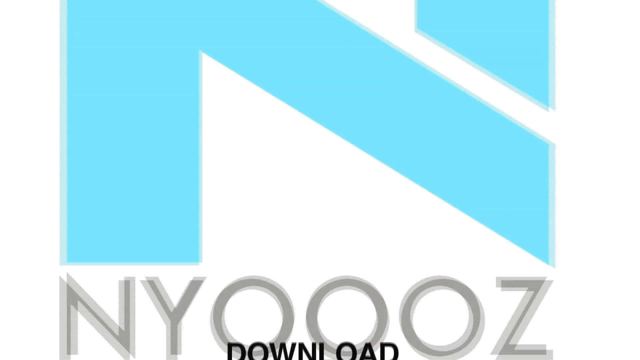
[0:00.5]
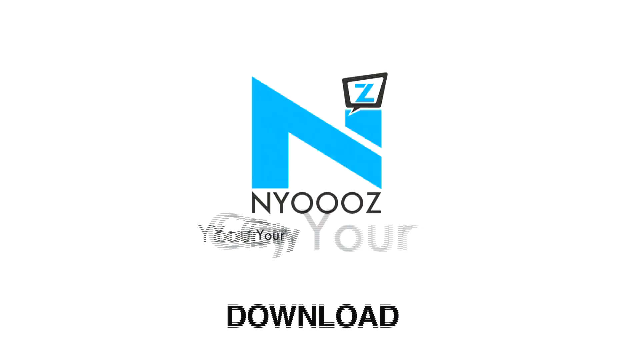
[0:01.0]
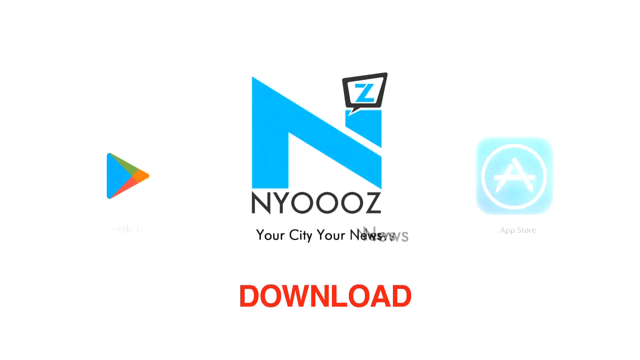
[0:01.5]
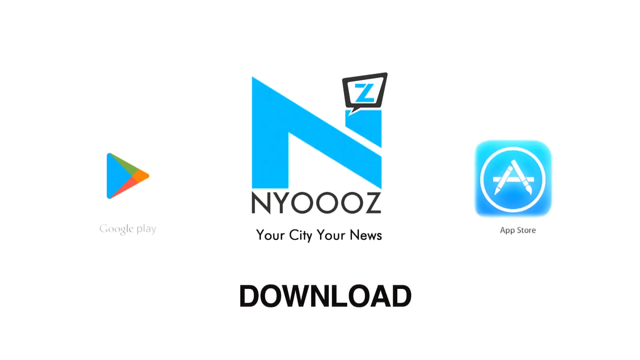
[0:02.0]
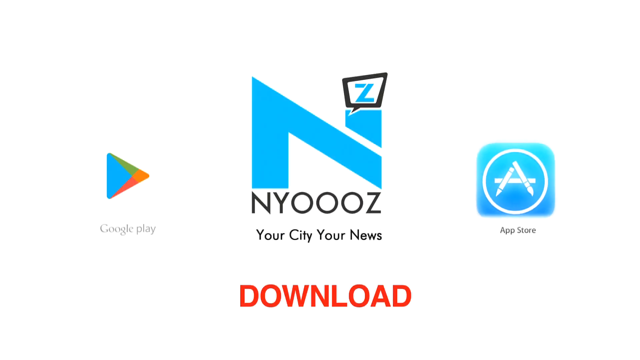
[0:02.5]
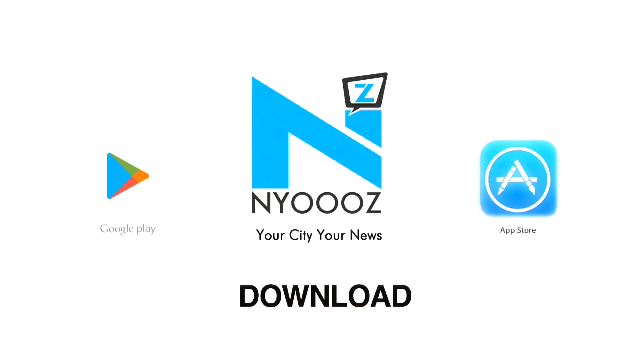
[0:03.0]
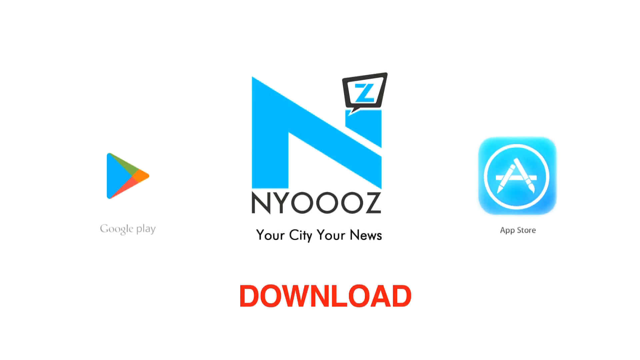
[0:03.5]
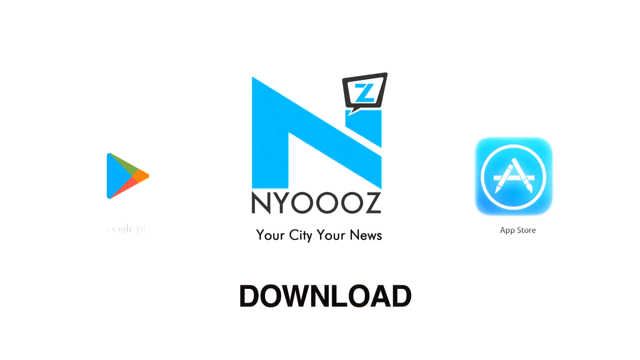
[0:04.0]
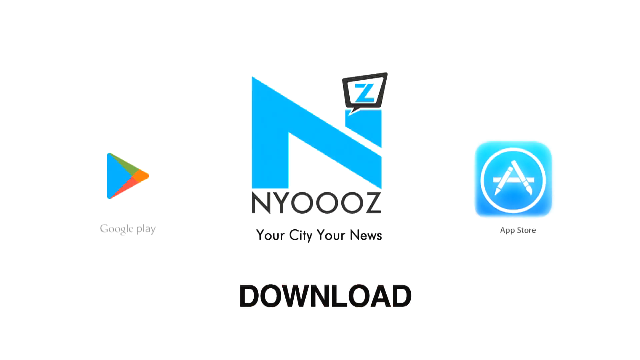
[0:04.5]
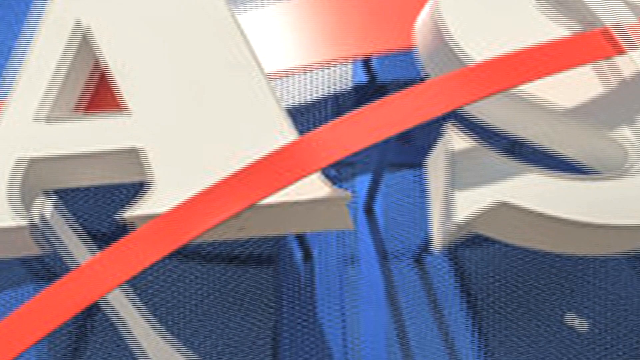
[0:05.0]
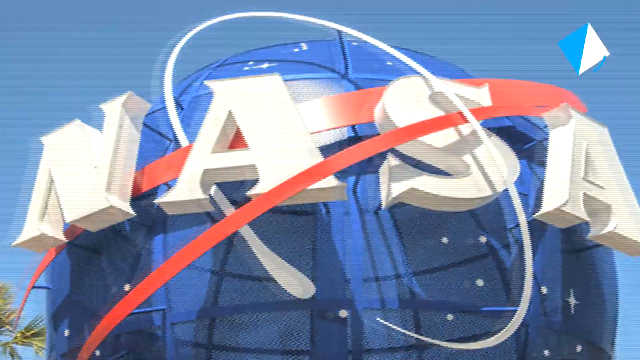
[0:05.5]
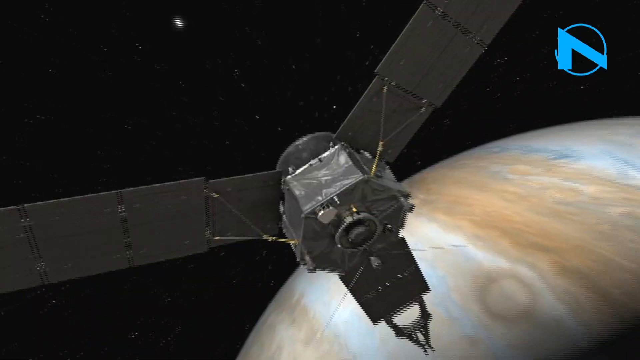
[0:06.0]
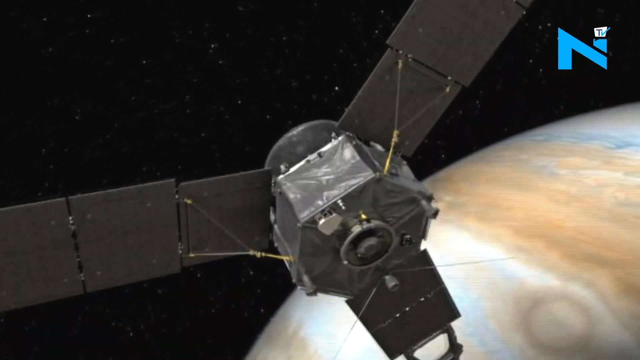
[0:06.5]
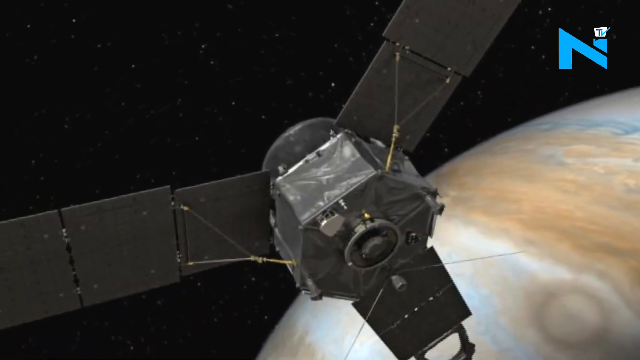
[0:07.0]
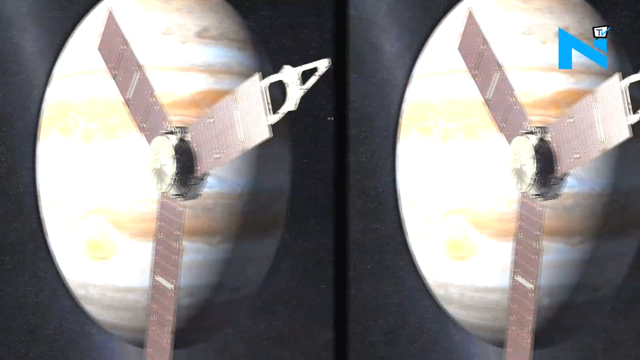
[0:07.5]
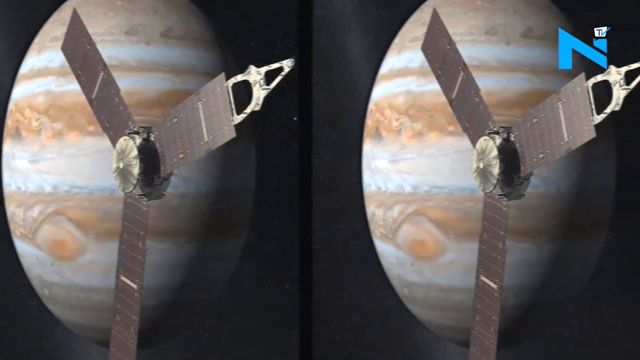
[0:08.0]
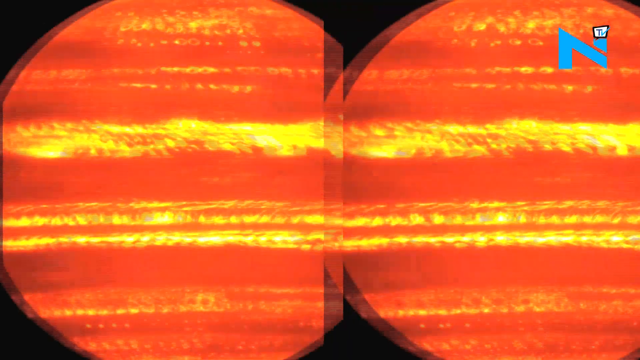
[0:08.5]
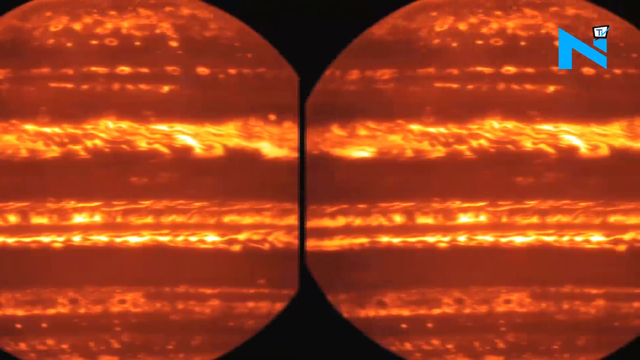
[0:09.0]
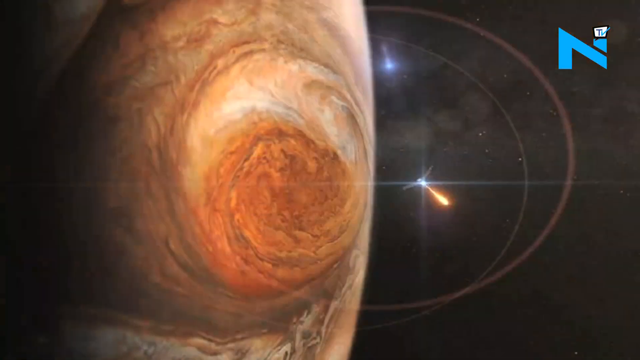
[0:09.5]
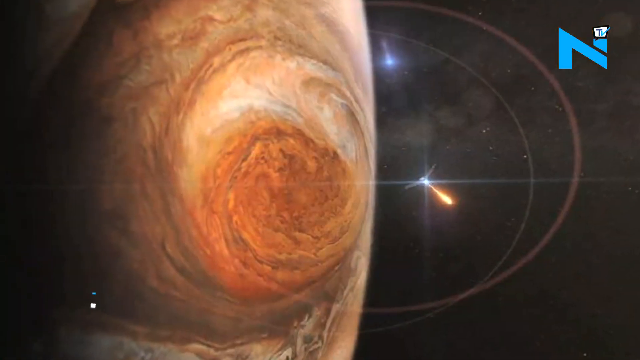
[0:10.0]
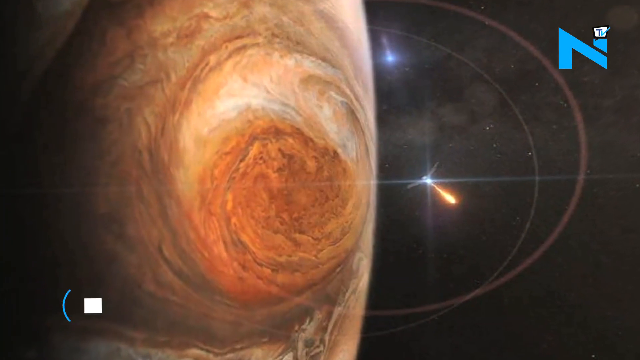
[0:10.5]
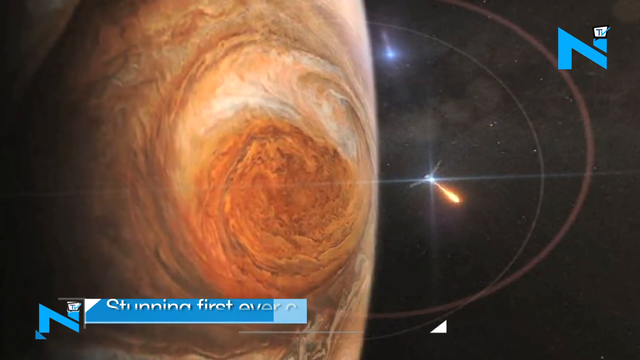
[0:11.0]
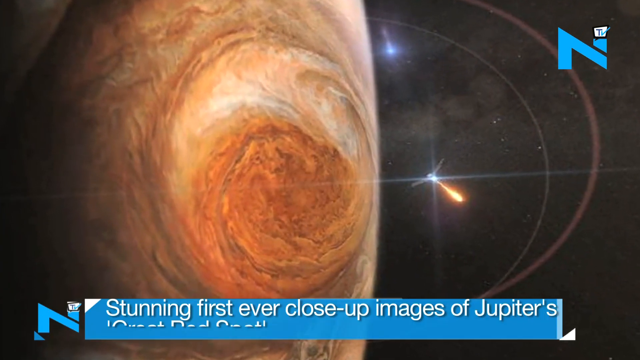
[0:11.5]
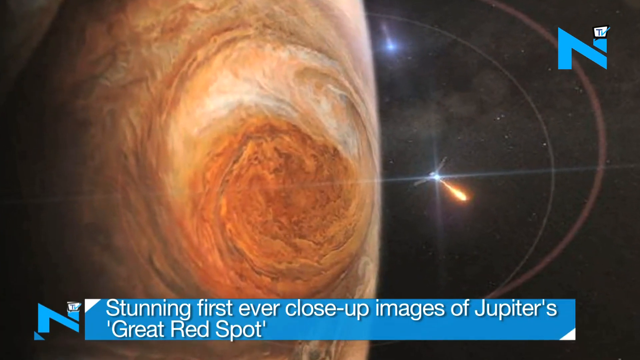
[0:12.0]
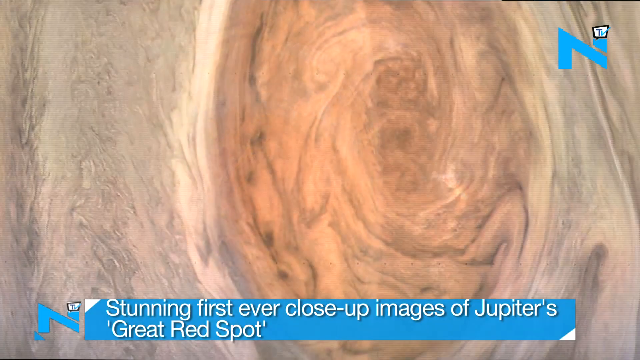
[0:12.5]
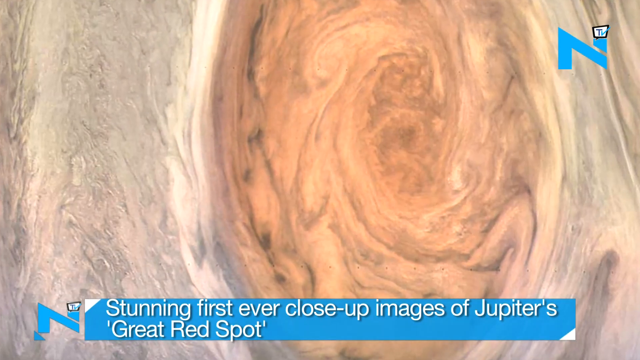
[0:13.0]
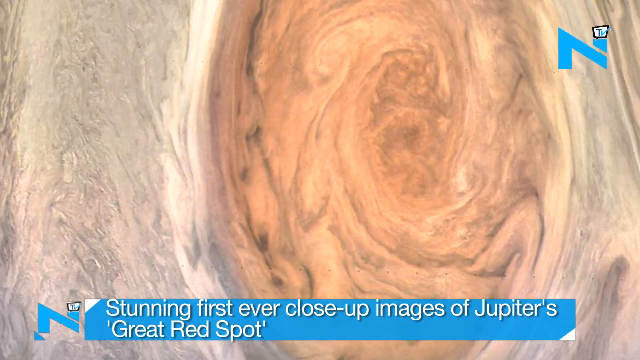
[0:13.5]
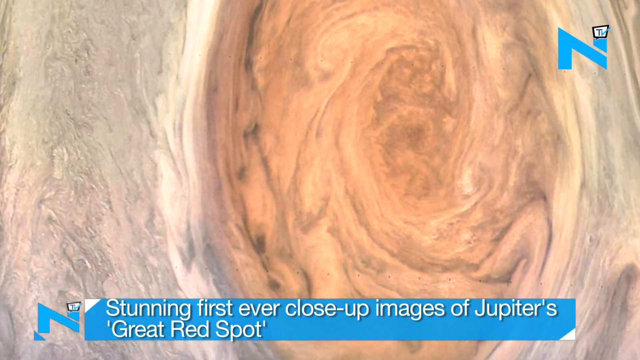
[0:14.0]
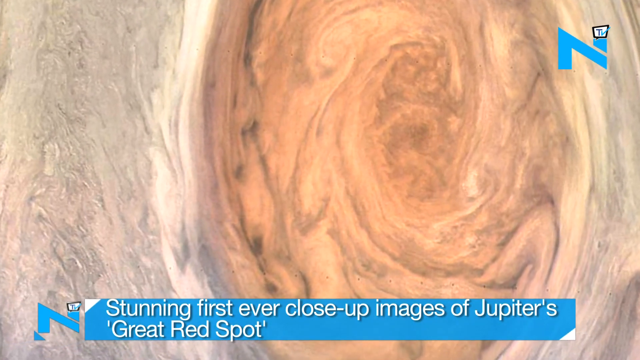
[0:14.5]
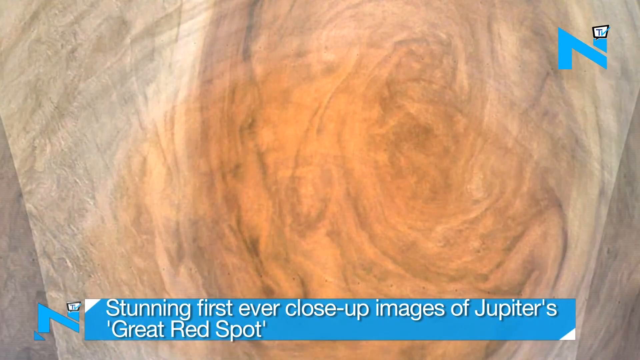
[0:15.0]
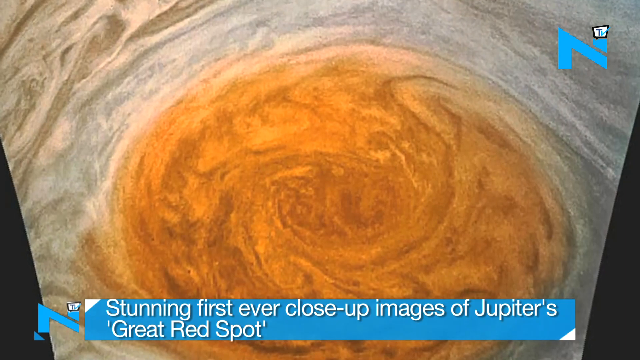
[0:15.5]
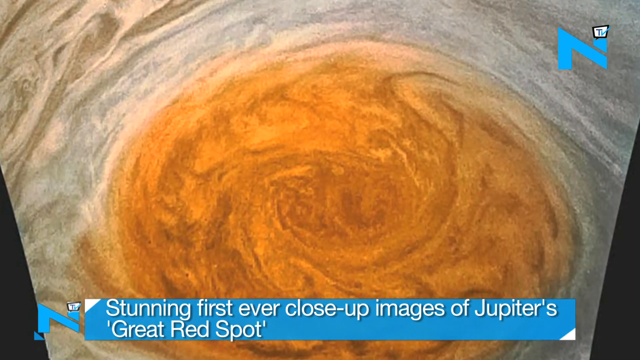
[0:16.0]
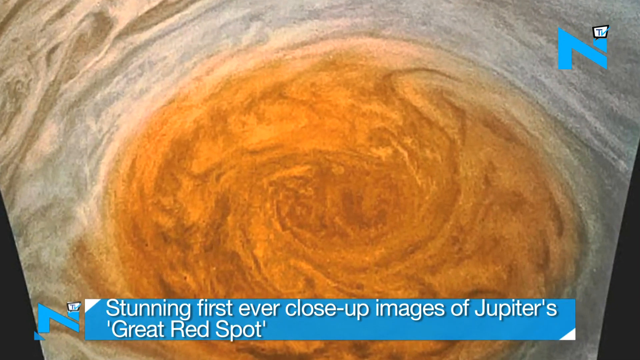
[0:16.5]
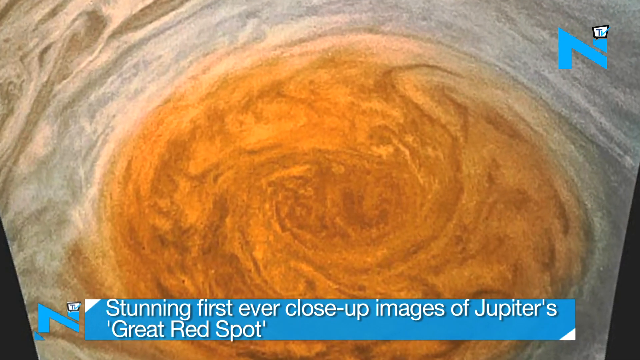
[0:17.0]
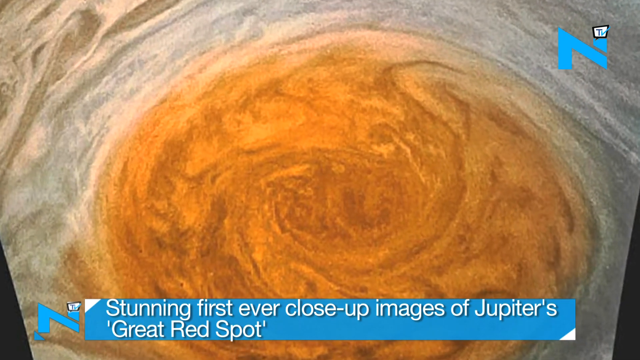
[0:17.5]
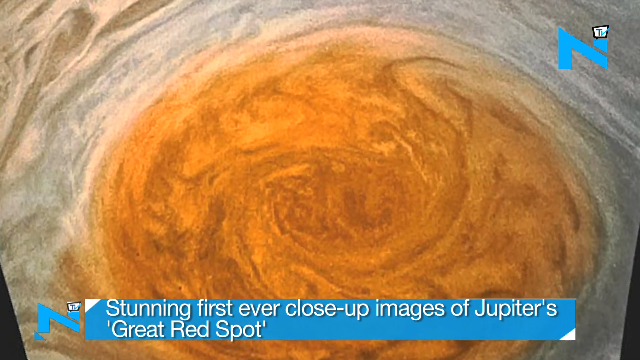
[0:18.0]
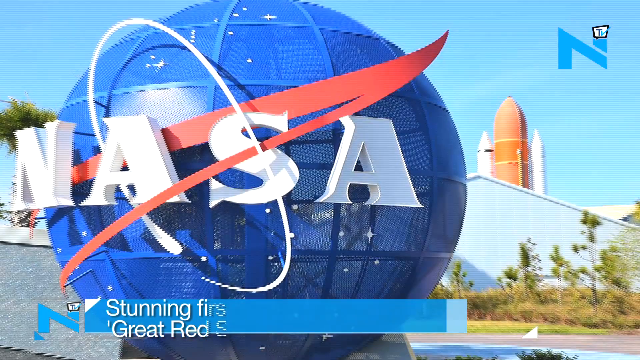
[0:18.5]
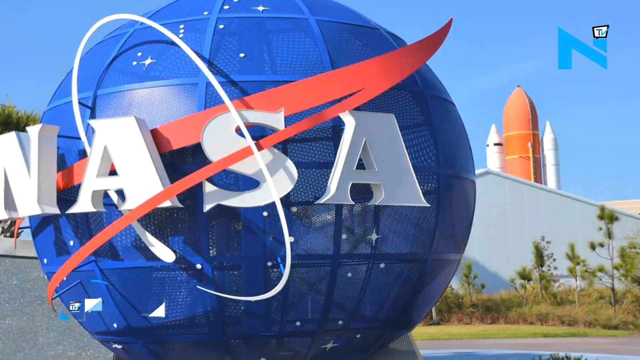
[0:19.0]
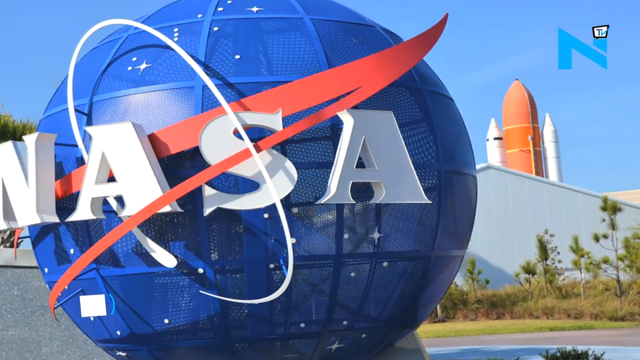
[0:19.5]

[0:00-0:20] The video opens on a news screen showing a capital letter N in blue, with the word spelled "NYOOOZ" written below it, along with "your city, your news". A download button at the bottom of the screen flashes red. Next, a NASA logo appears, followed by an image of a satellite with three wings in outer space, with a planet in the background. The screen transitions to show the satellite flying across the side of the planet, which is quite large and pale with brown patches on it; it looks like it could be Jupiter. The image is repeated, so the same image appears on both sides of the screen. Next comes what looks like the Sun, with two images of the same Sun on the left and right. Then what looks like a large planet appears, with the satellite looking quite tiny beside it on the right side. The curvature of the planet is on the left, and the tiny wings of the satellite are visible, with a trail of flames from the satellite's rocket fuel trailing behind it. Along the bottom of the screen, in white text on a blue background, a caption reads "stunning first ever close-up images of Jupiter's". A close-up view then shows an orange swirling mass on the surface of the planet. These are all still images. The camera pans closer, and an illustration shows a giant NASA globe in front of a building. The globe is blue with NASA written across it. In the background is a large red rocket with two white rocket boosters on either side.